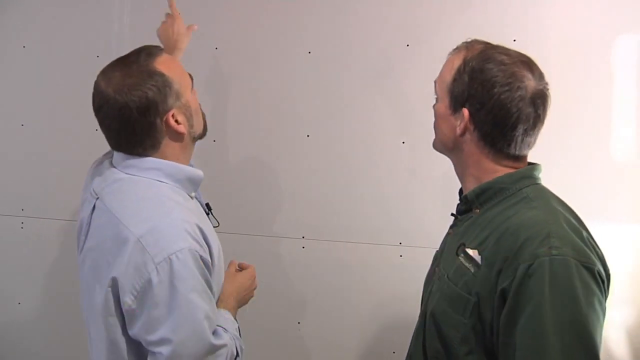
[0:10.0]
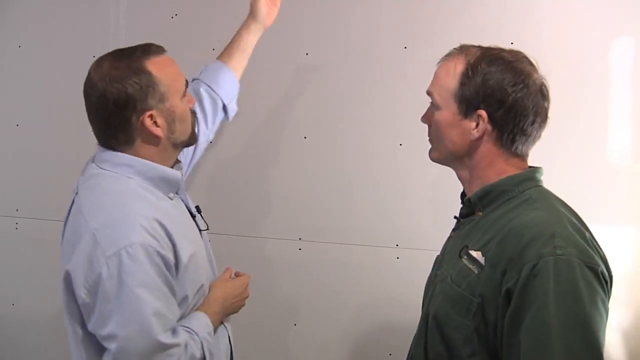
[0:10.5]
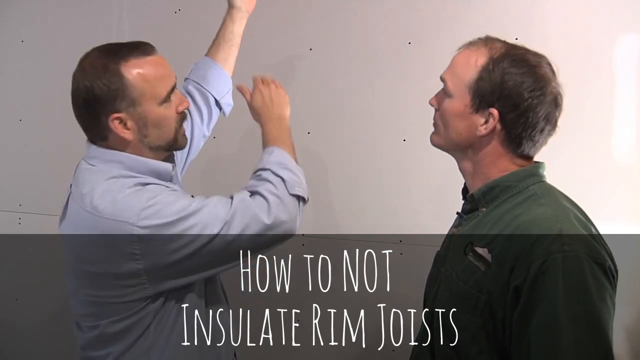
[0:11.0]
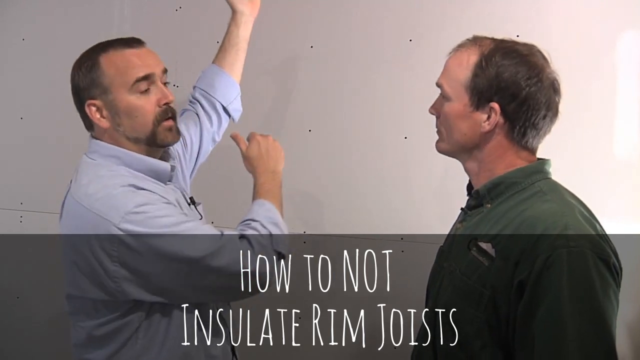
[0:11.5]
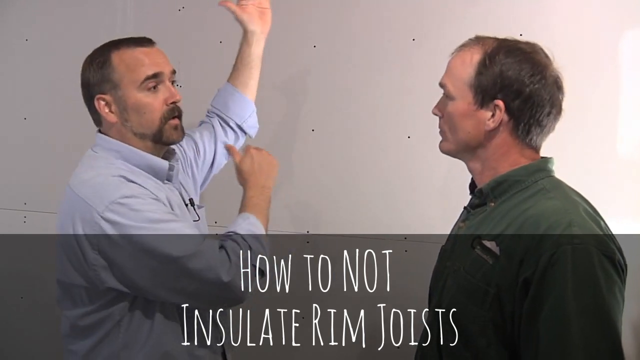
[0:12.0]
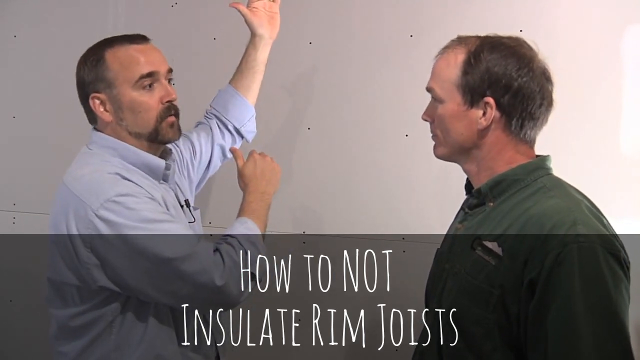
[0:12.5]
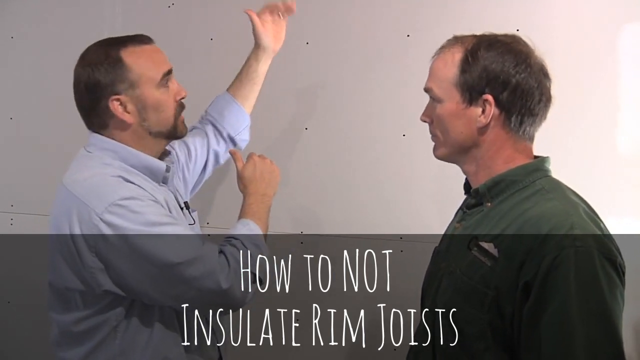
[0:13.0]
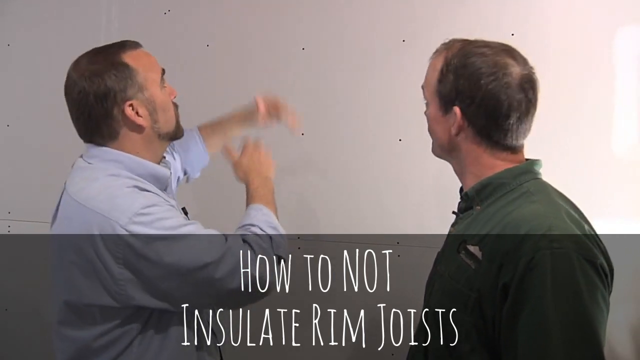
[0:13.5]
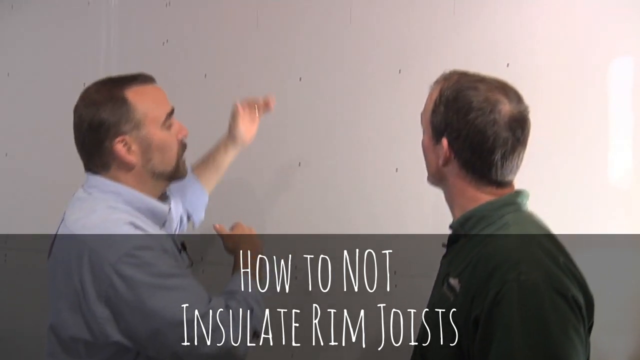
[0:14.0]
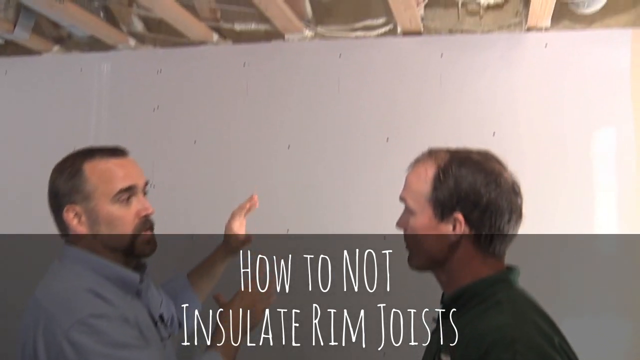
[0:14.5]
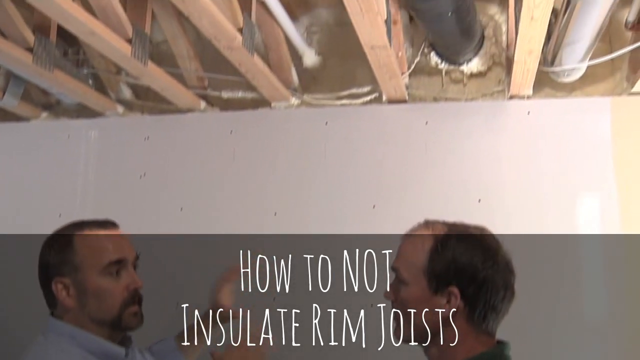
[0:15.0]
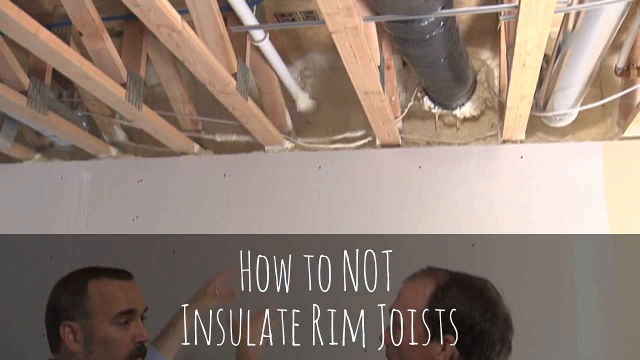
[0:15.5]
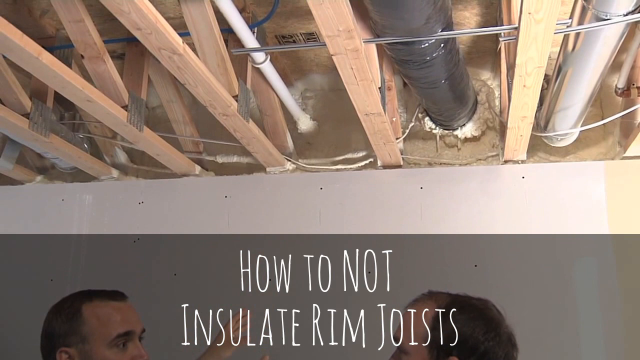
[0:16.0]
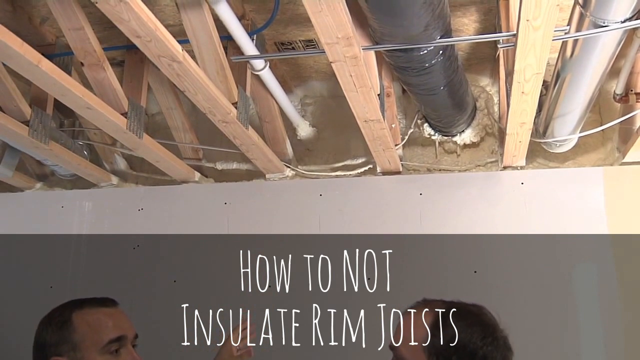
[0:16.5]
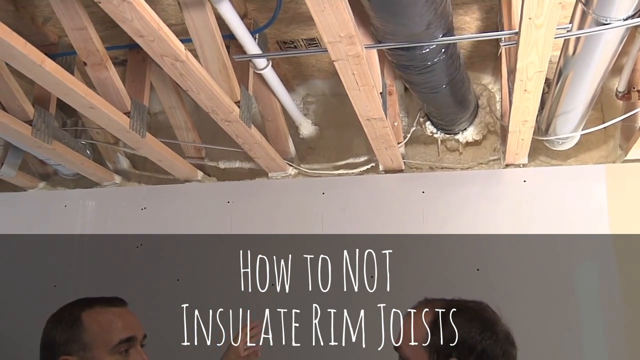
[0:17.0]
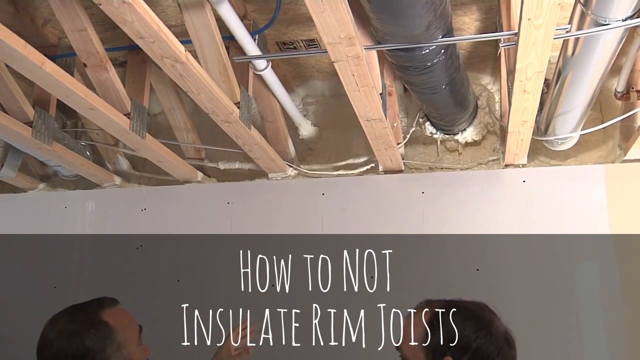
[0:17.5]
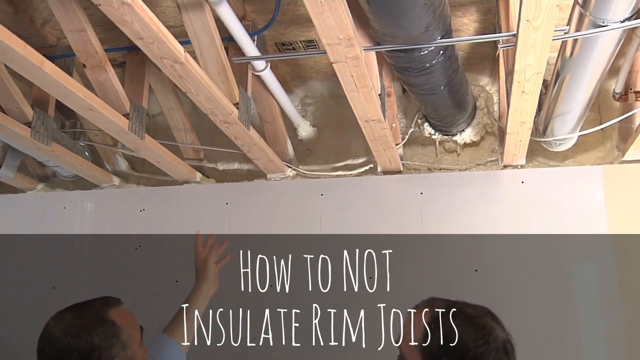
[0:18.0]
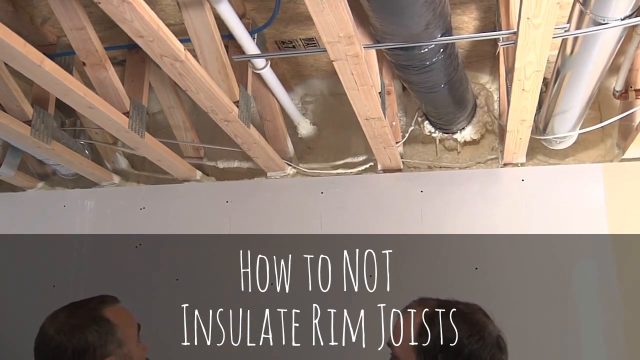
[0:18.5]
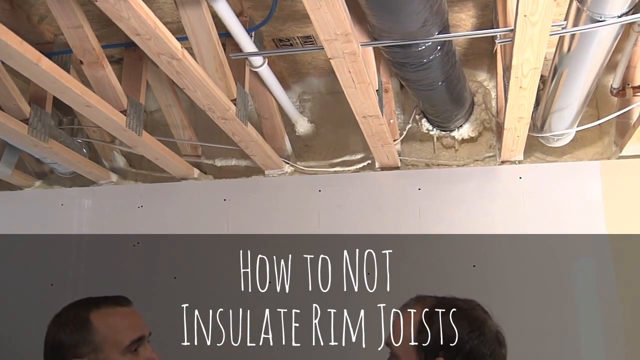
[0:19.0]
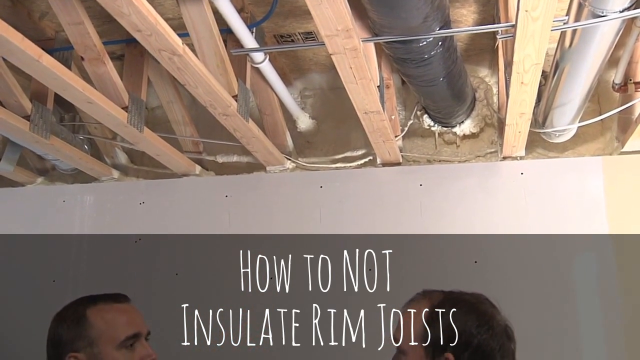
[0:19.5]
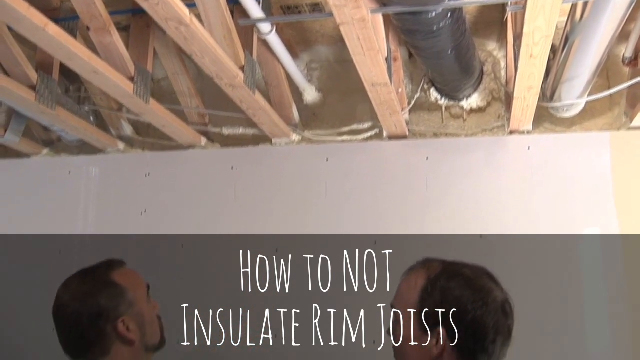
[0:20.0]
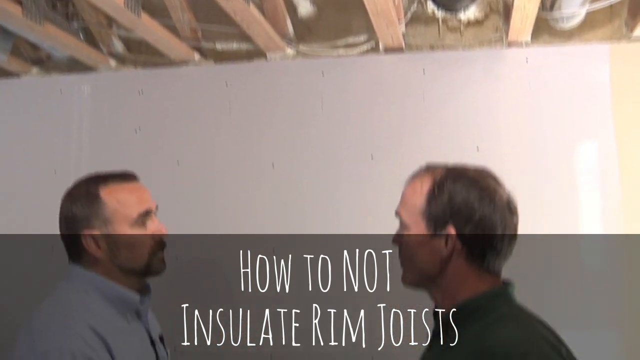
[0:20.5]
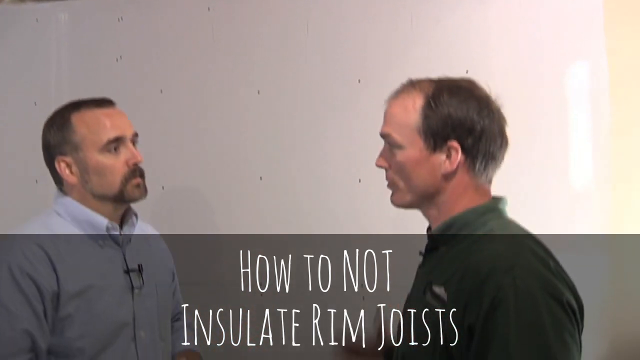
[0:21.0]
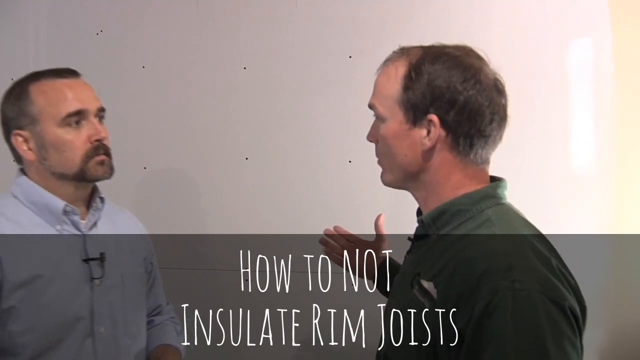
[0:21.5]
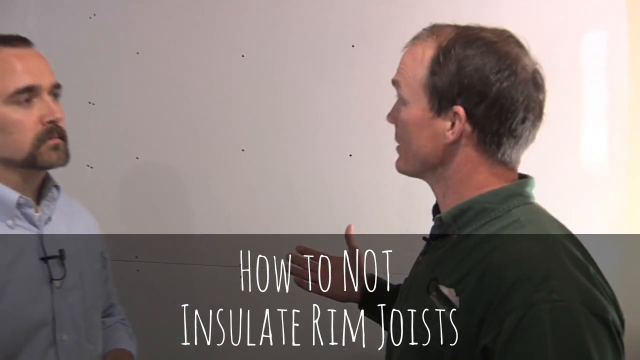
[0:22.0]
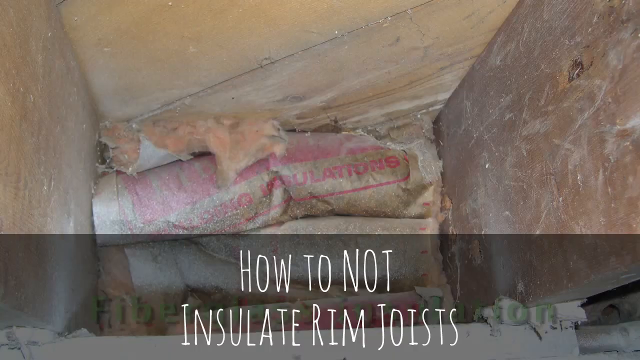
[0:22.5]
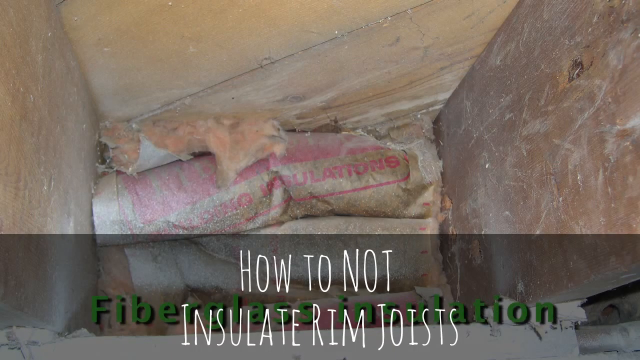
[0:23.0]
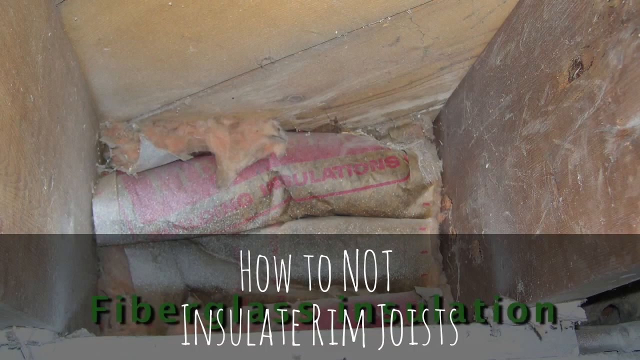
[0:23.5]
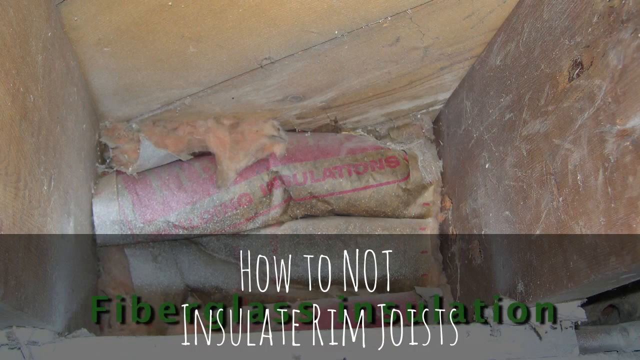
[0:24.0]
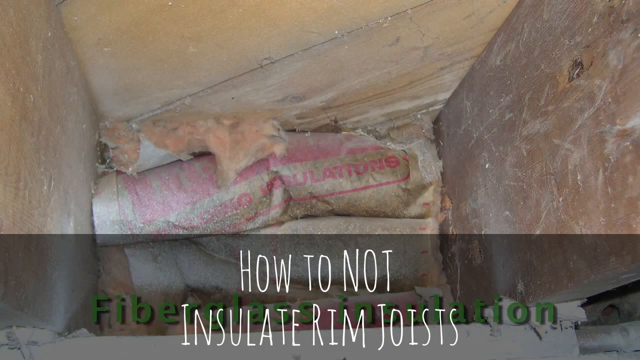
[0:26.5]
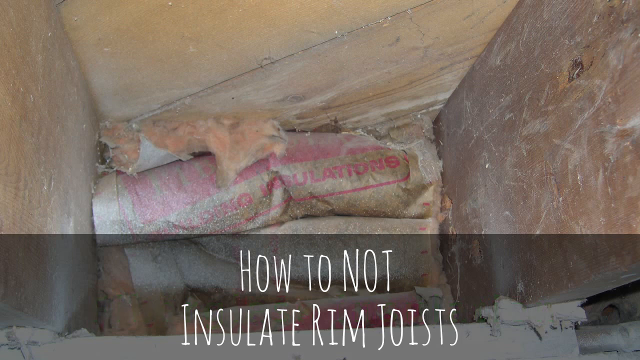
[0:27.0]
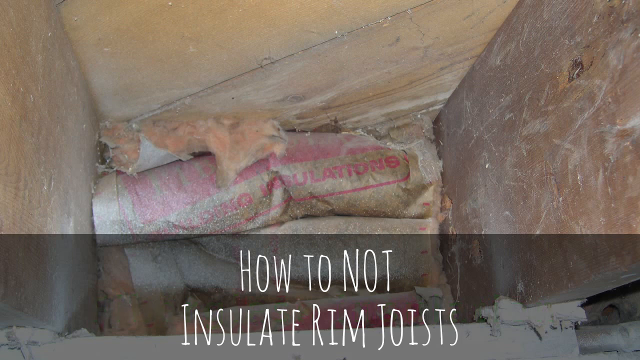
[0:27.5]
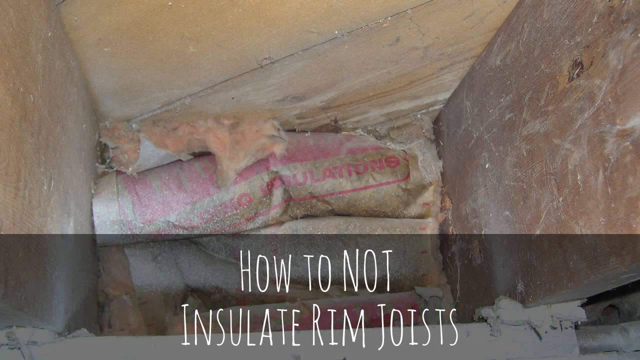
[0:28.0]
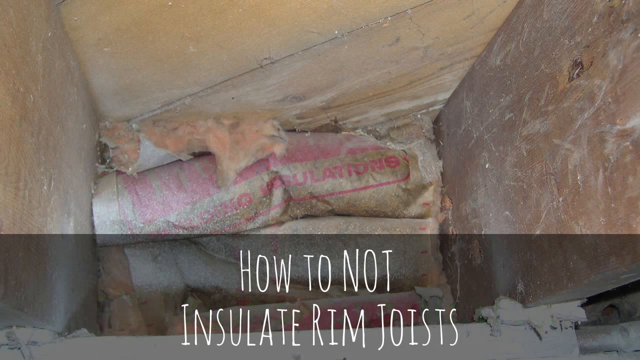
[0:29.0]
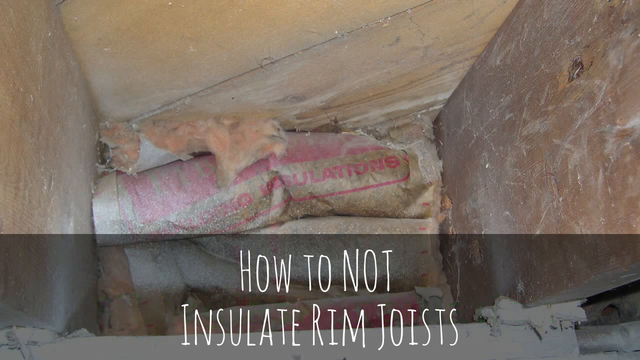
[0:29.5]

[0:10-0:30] Apparently one man wears a blue shirt and the other a green shirt. The man in the blue shirt, who has a mic attached to his shirt, seems to be explaining something to the other man and shows him something on the roof. The roof has no ceiling and there are planks on it. Pipes run along the roof: a white pipe, a black pipe that is the biggest of them all, and another white pipe. Wires also run throughout the roof, and the wall is white. The man explains and points with his hand. On-screen text reads "how to not insulate", and the video shows bags of some packaging inside a cardboard storage that is old and damaged.